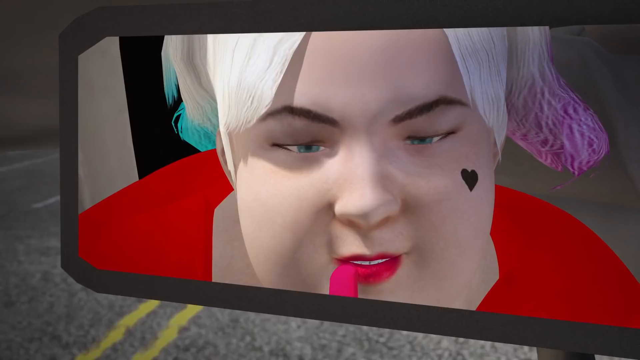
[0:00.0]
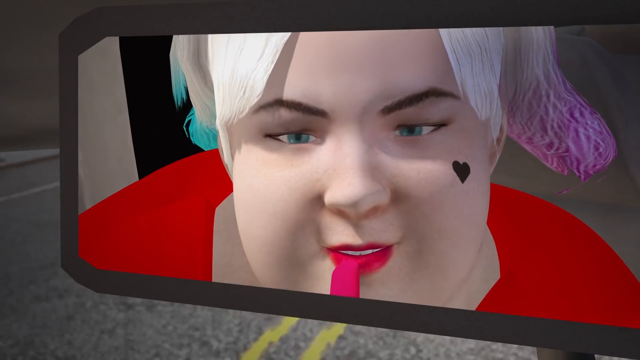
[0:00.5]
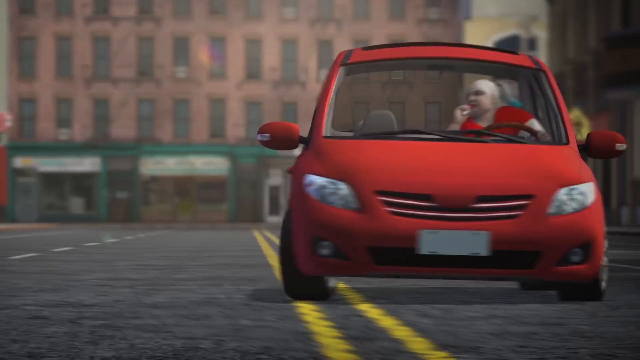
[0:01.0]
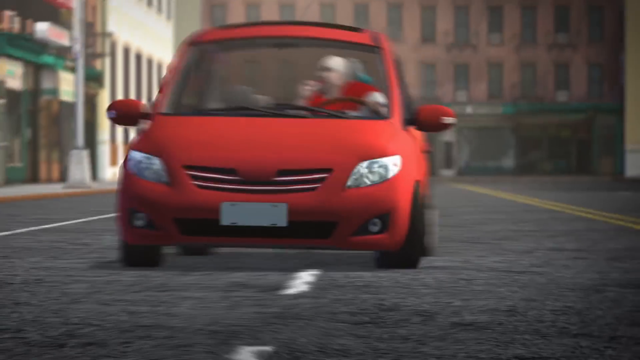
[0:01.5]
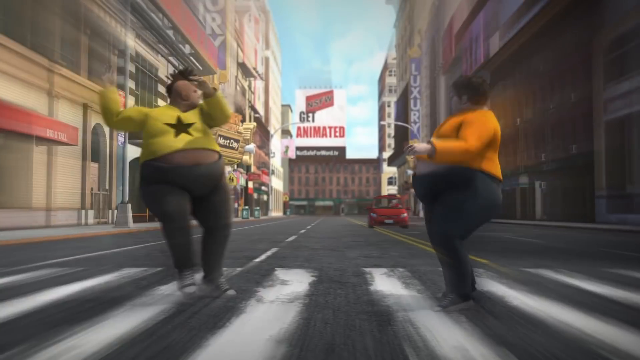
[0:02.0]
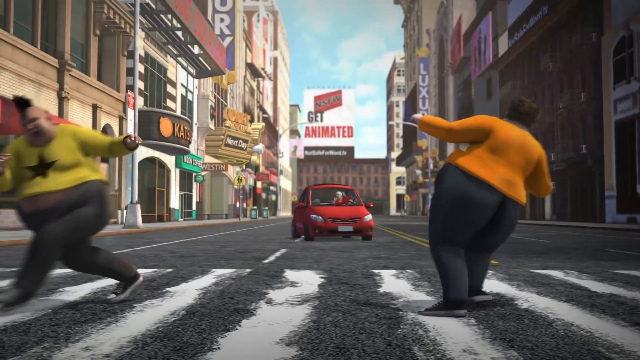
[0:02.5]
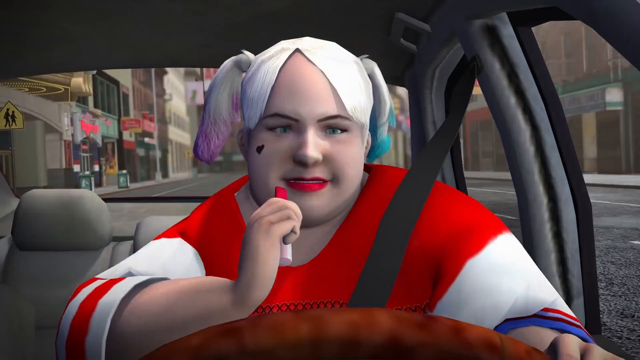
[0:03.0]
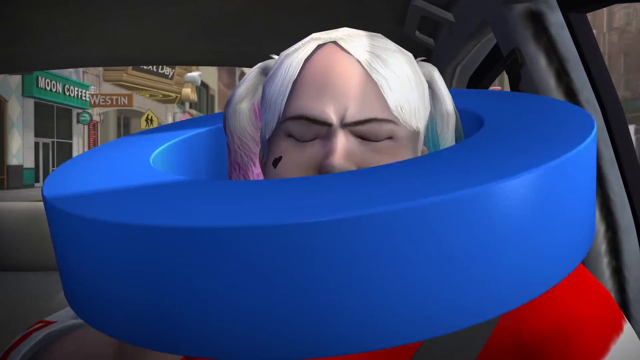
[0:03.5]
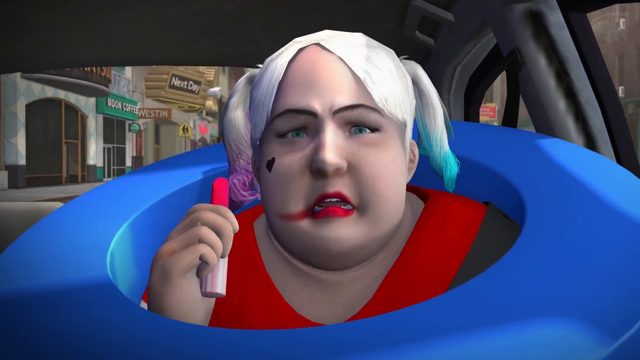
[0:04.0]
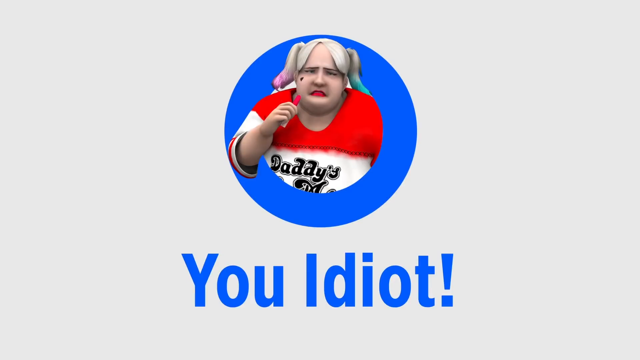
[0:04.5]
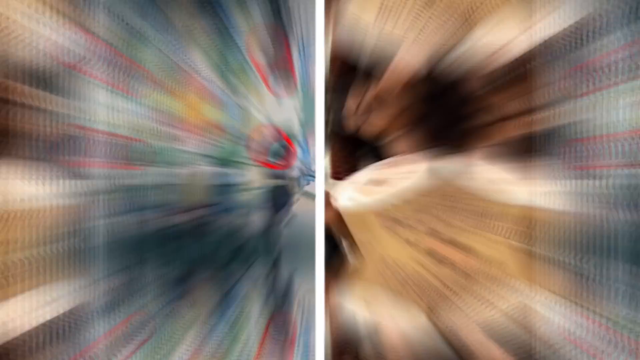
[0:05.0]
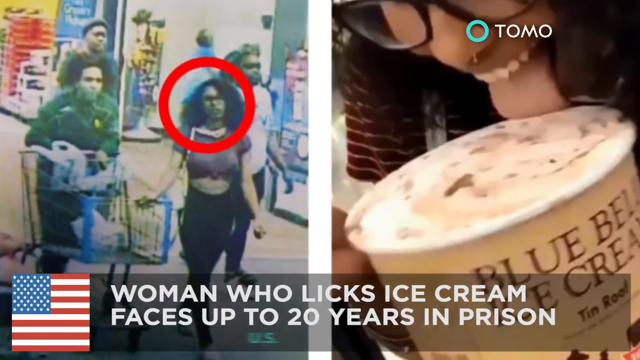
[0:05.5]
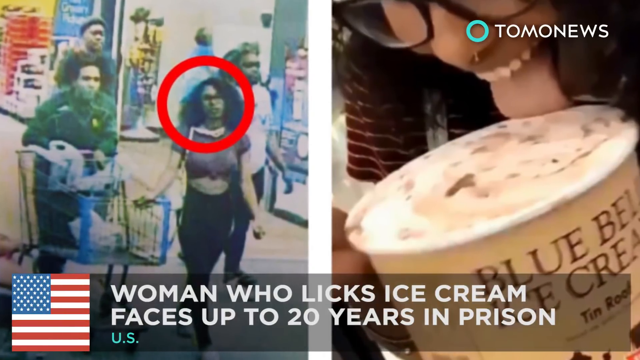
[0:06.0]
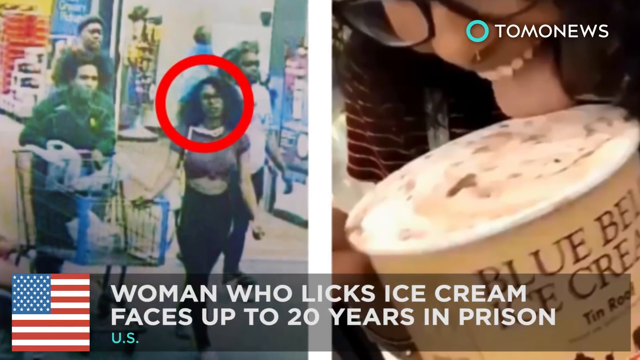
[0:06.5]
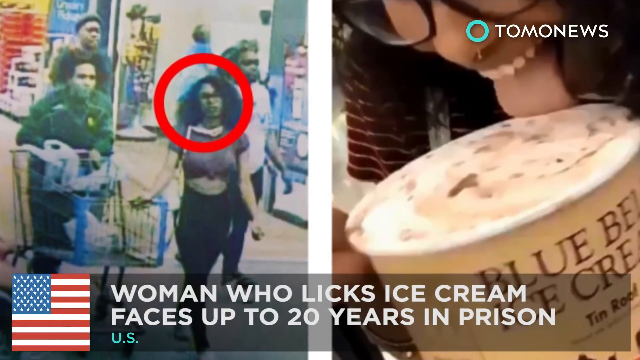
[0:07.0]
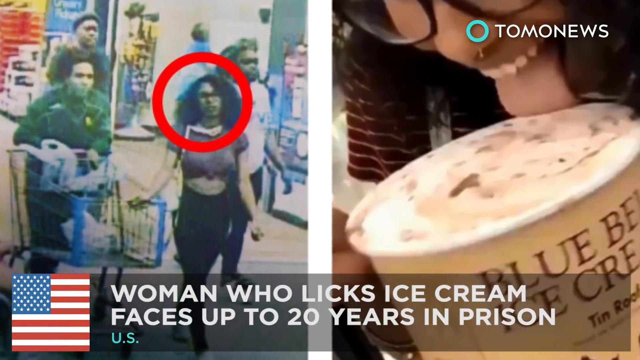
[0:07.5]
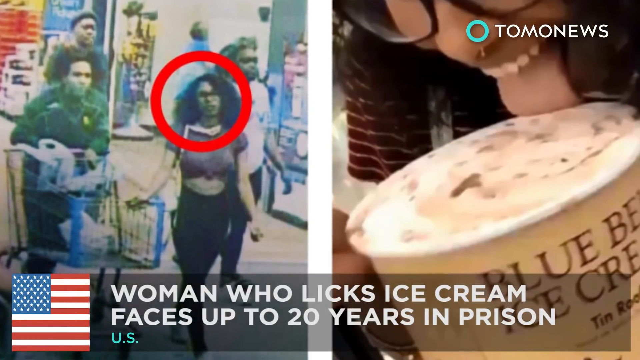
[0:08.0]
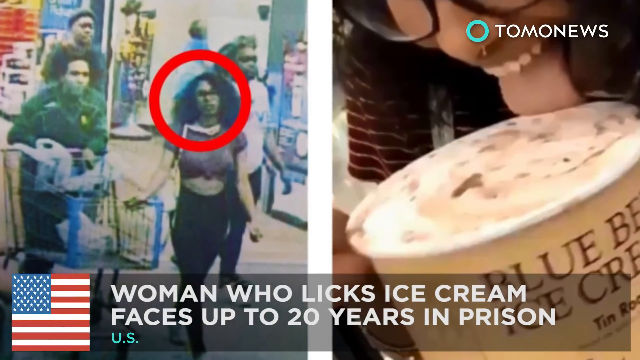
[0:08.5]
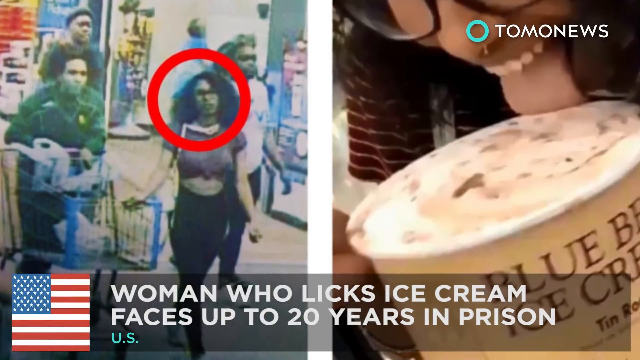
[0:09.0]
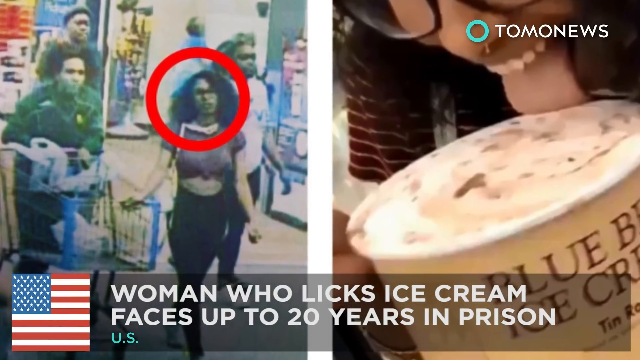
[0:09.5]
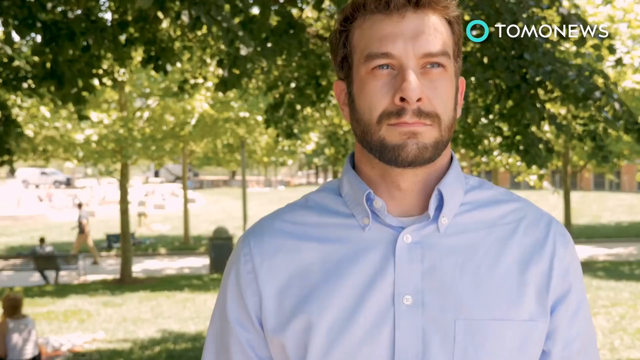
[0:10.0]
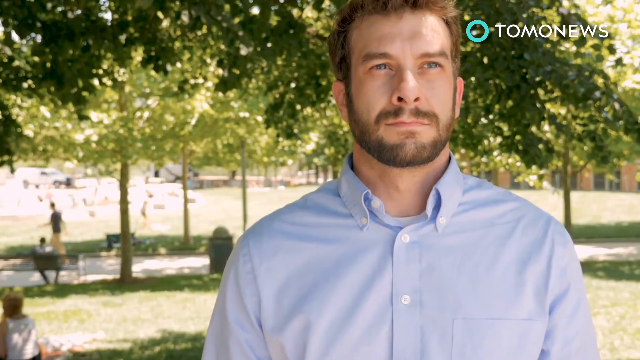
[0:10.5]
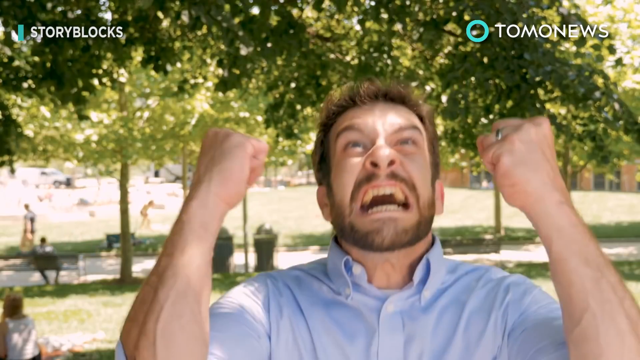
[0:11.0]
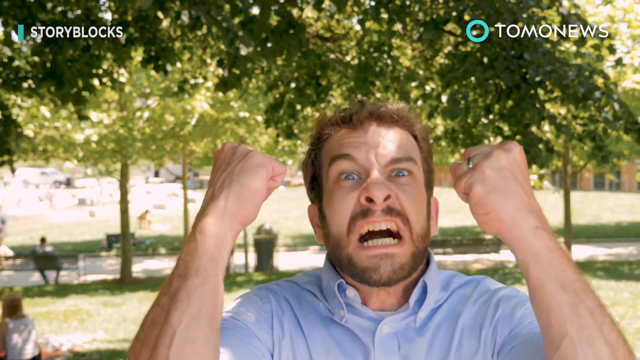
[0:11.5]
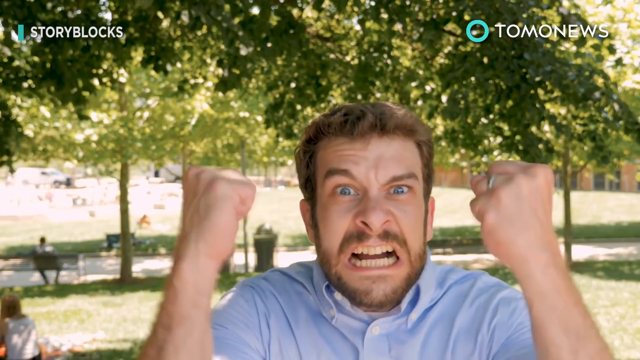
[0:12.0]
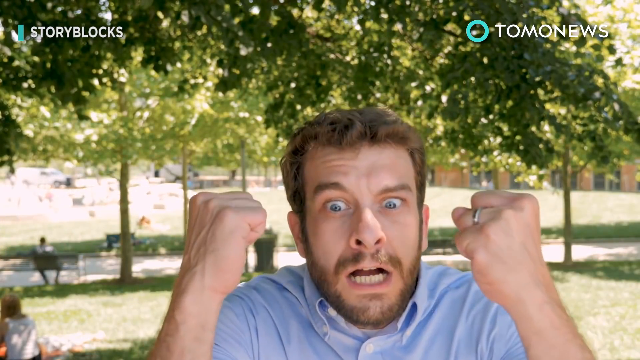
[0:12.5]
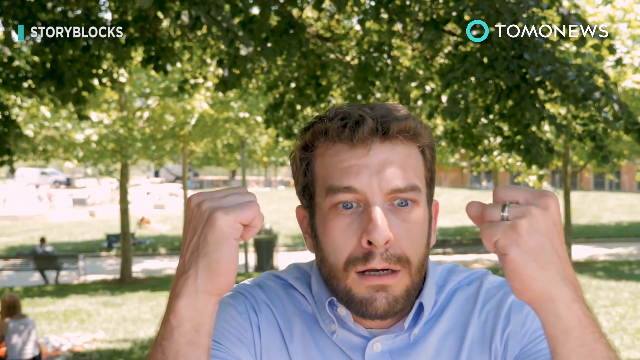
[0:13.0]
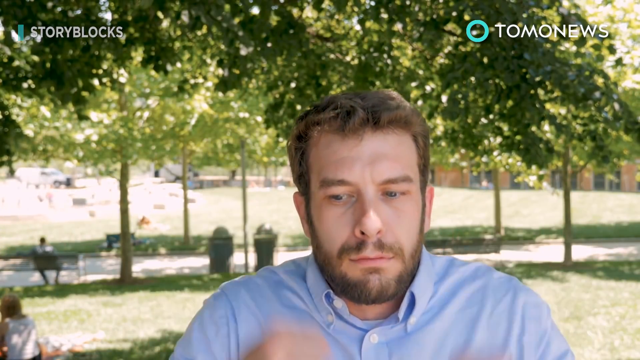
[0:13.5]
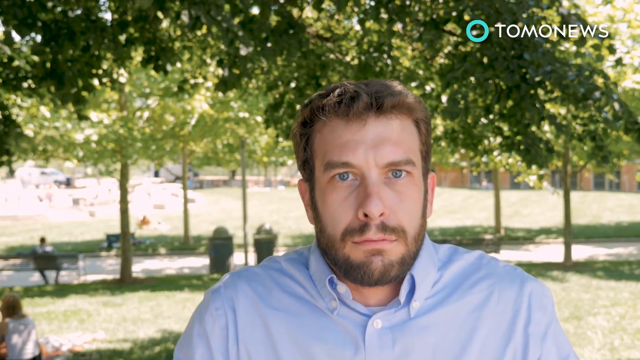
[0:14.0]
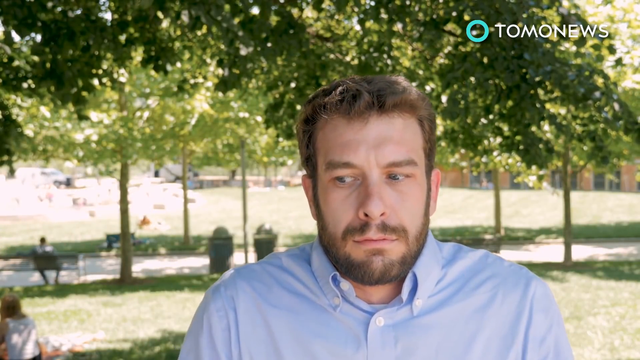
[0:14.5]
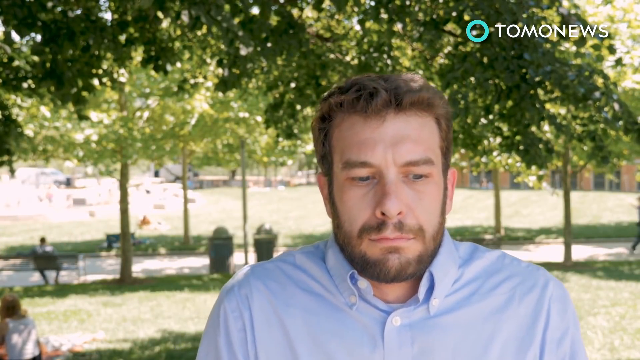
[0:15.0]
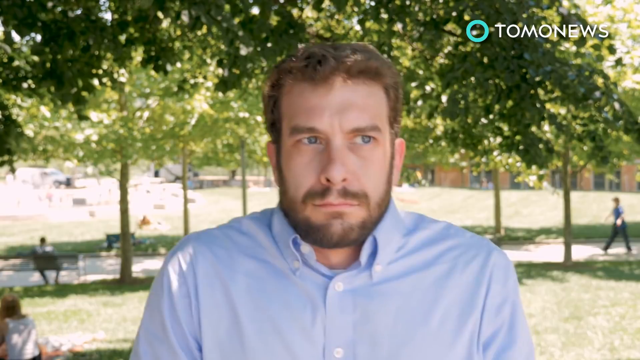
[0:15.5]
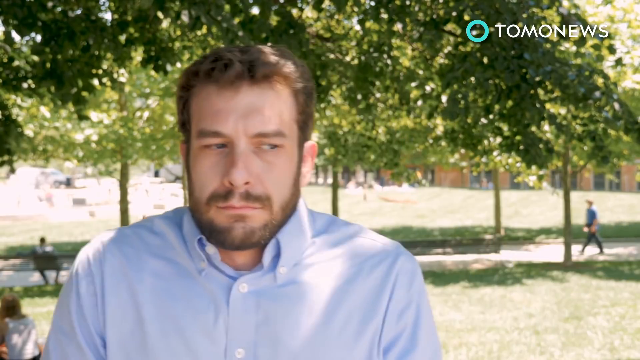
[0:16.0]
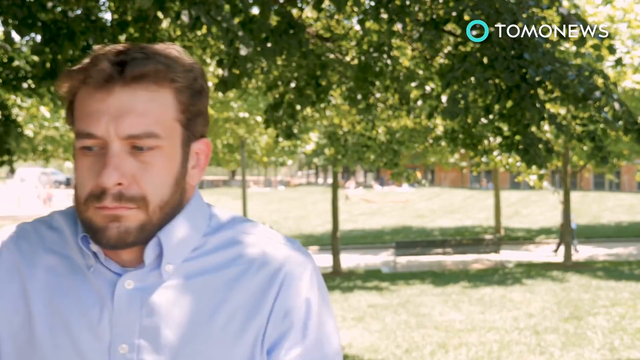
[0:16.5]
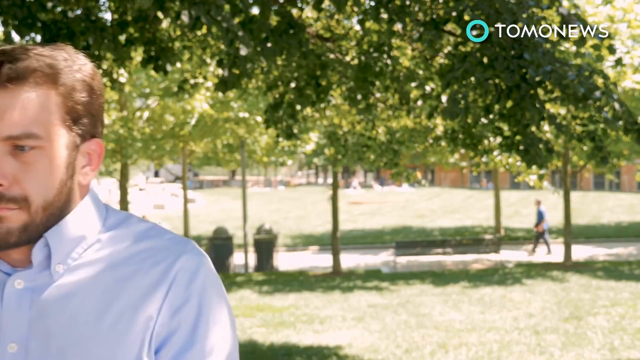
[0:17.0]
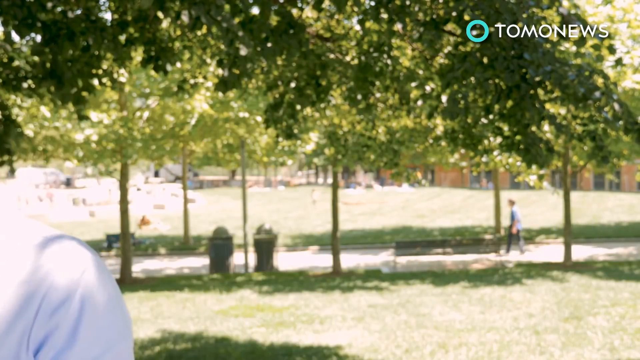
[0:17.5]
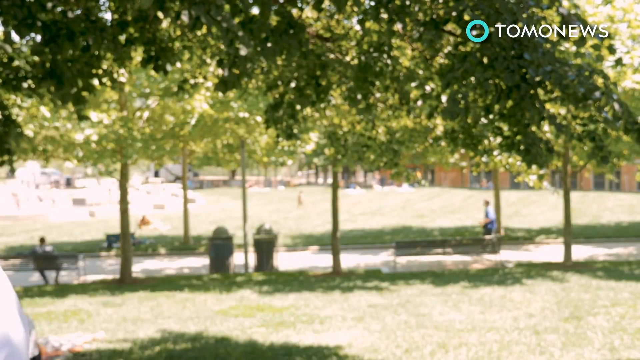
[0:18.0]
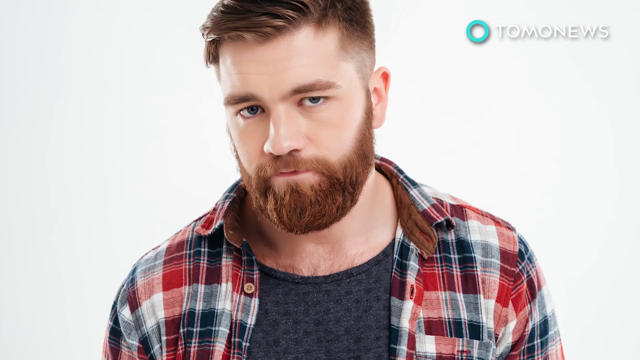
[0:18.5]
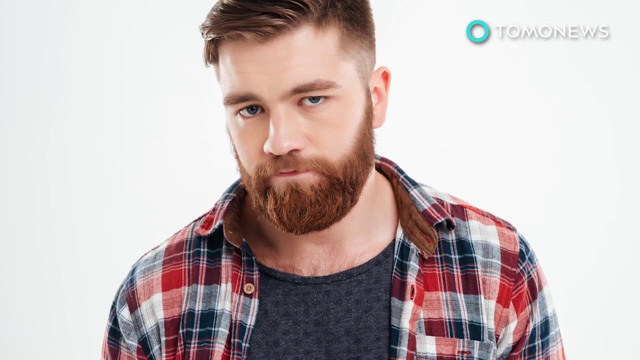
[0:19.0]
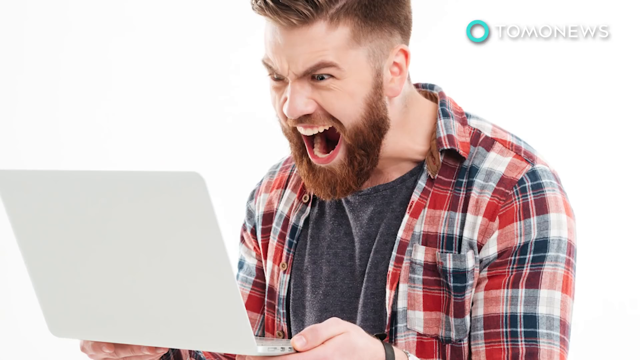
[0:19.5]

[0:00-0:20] Two women are in the street, and there is a woman driving a car. A round object comes into the car, and the driver becomes confused while driving; it looks like she loses control of the car as the two women are in the street. The scene then changes to another news item that says "a woman who licked ice cream." A photo shows a lot of people, with one woman indicated by a red circle. The text at the top says "a woman who licked ice cream face up to 20 years in prison." Next, an angry man with short hair wearing a powder blue shirt appears to be screaming and looks confused. A man facing a laptop also appears, his face looking very confused.